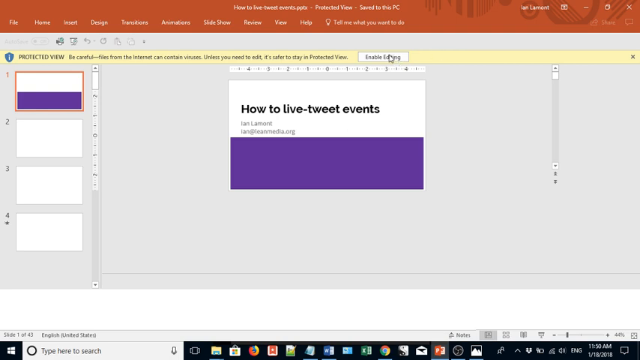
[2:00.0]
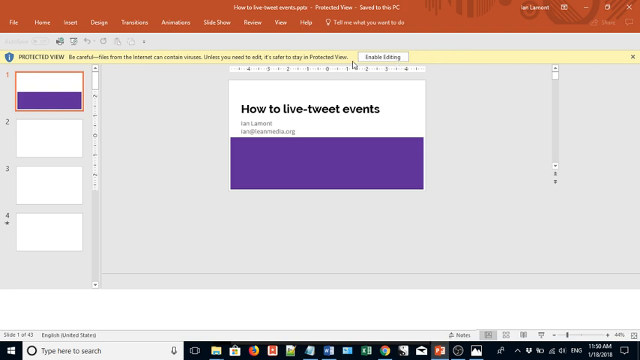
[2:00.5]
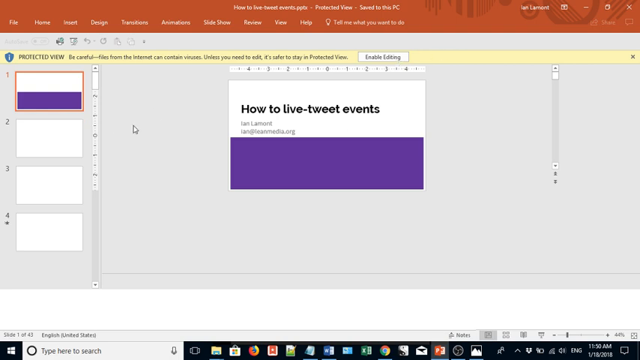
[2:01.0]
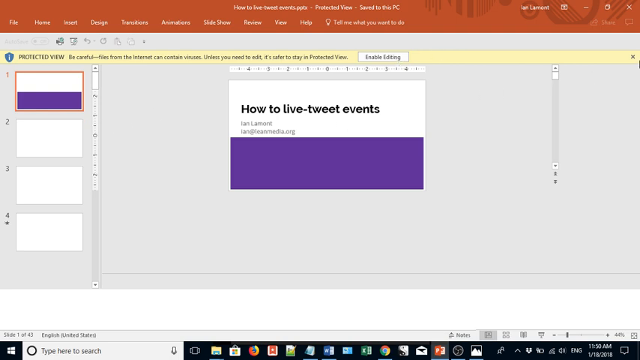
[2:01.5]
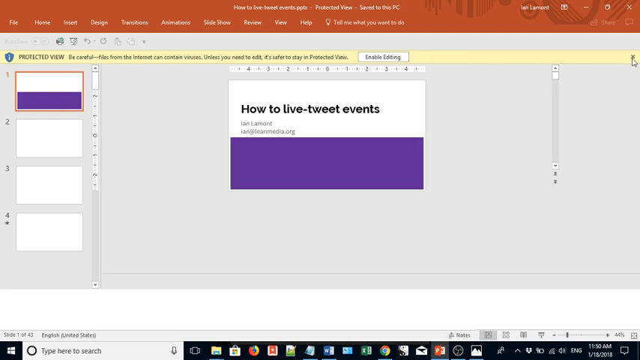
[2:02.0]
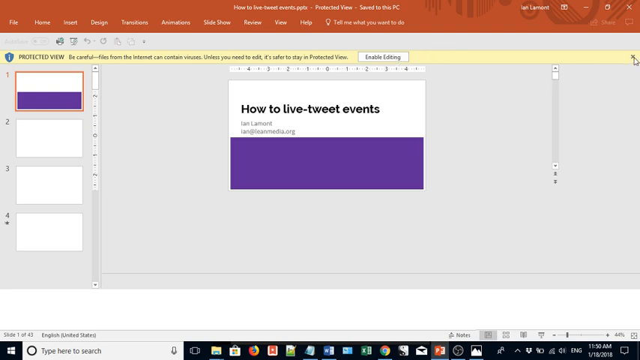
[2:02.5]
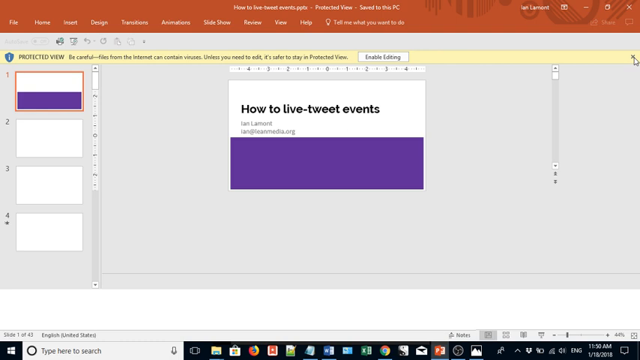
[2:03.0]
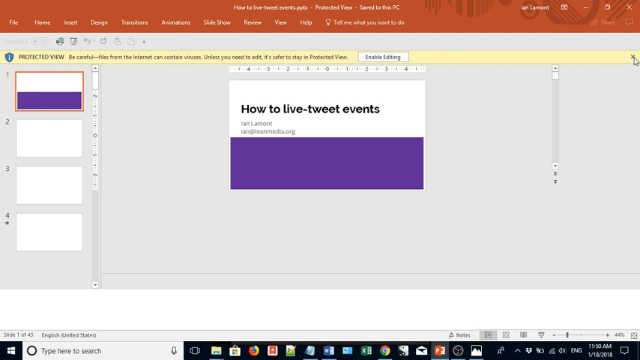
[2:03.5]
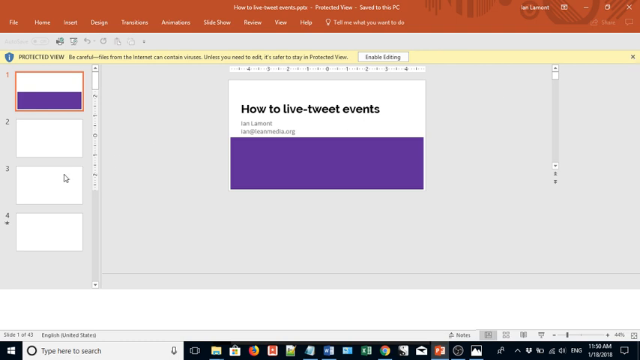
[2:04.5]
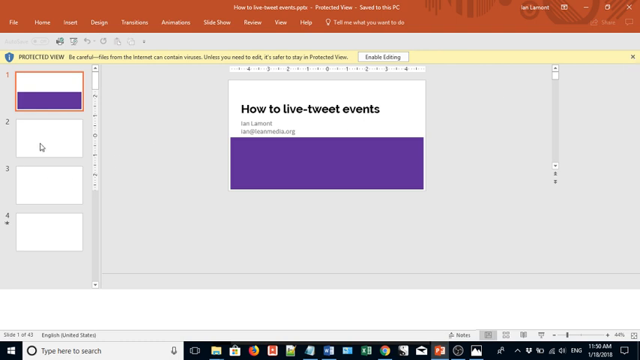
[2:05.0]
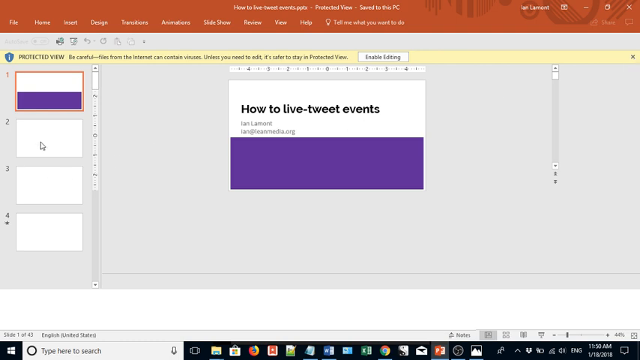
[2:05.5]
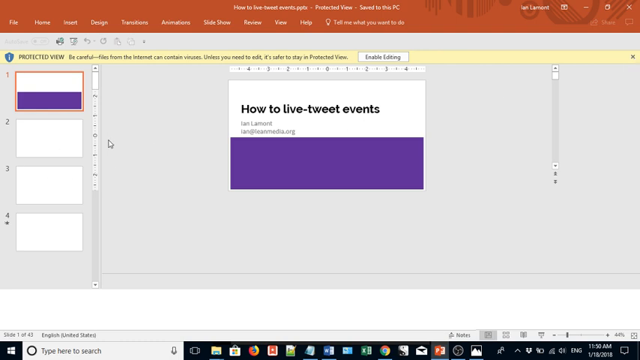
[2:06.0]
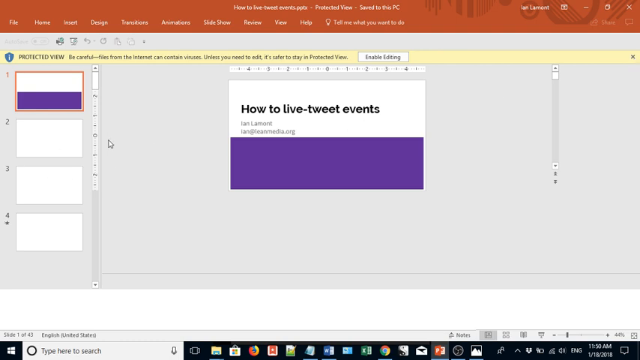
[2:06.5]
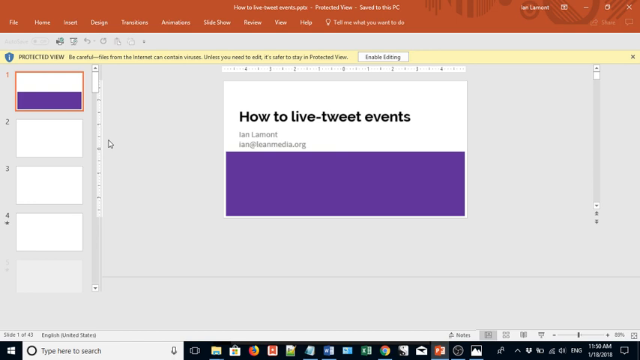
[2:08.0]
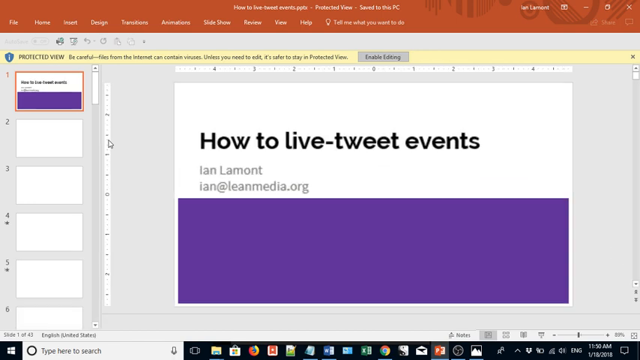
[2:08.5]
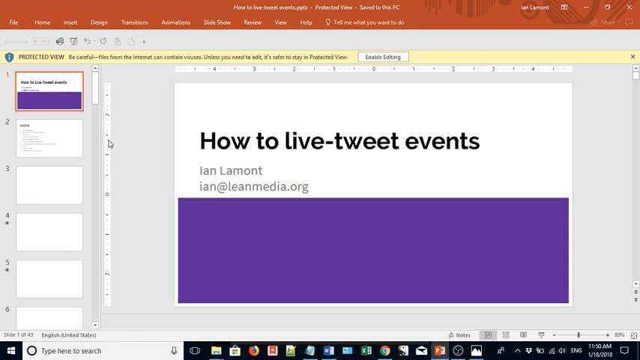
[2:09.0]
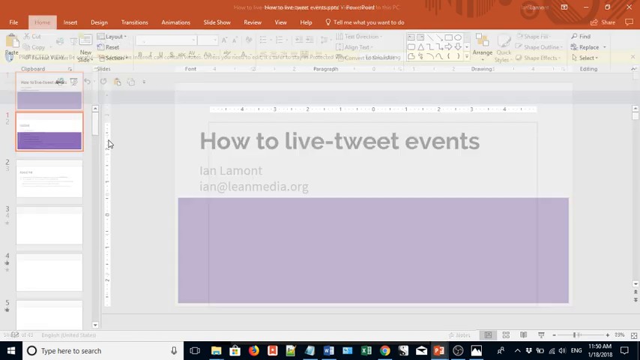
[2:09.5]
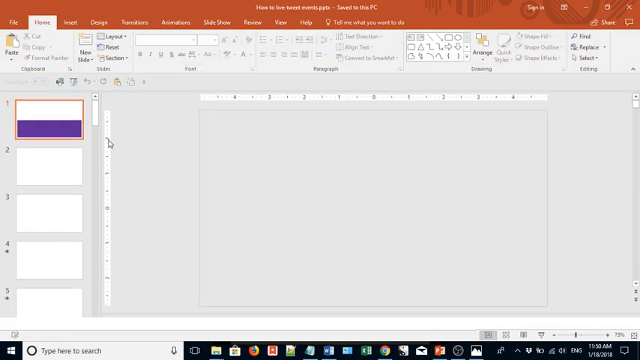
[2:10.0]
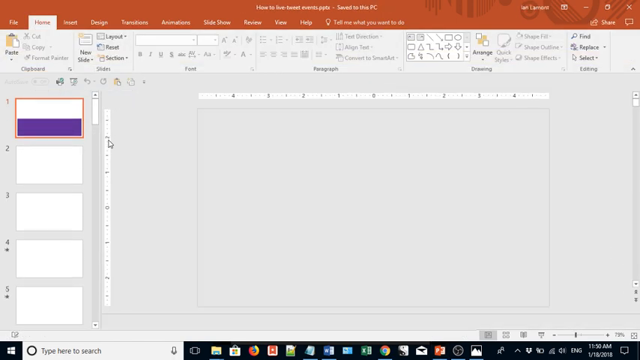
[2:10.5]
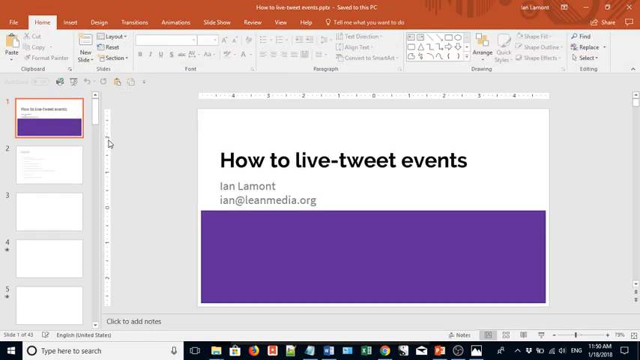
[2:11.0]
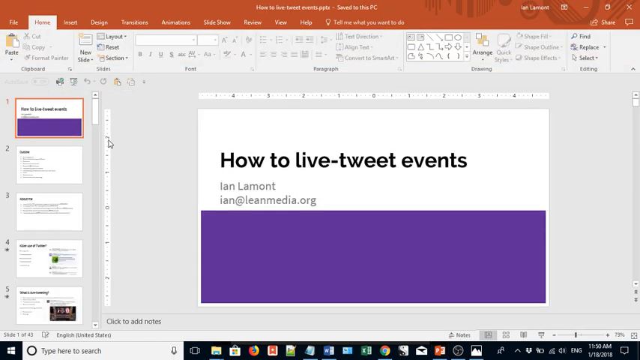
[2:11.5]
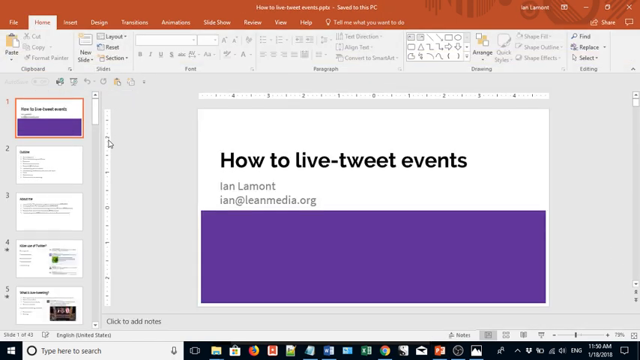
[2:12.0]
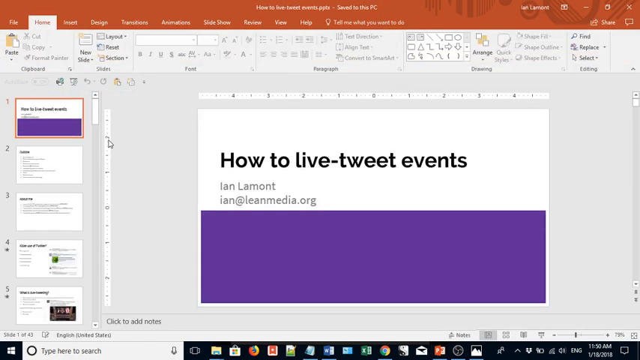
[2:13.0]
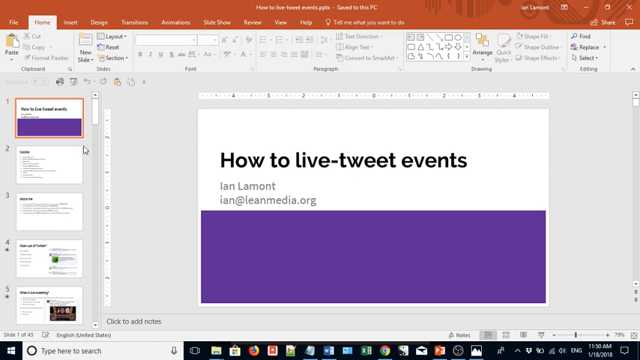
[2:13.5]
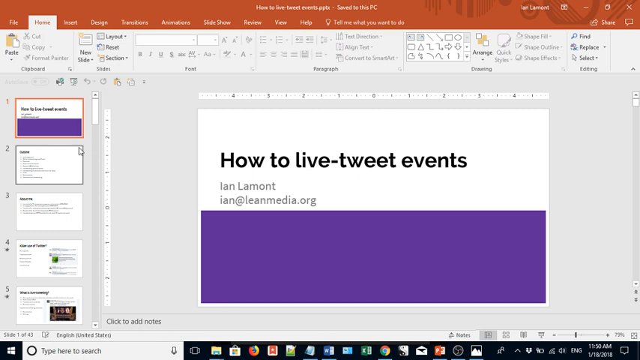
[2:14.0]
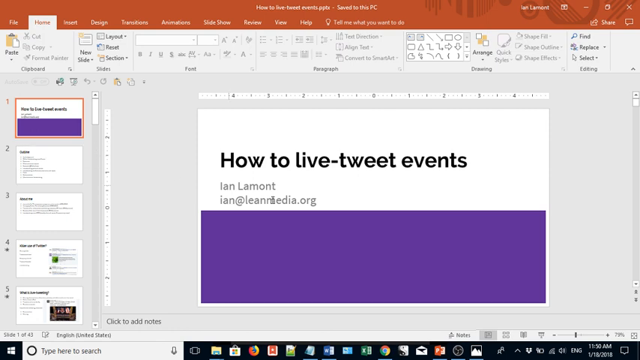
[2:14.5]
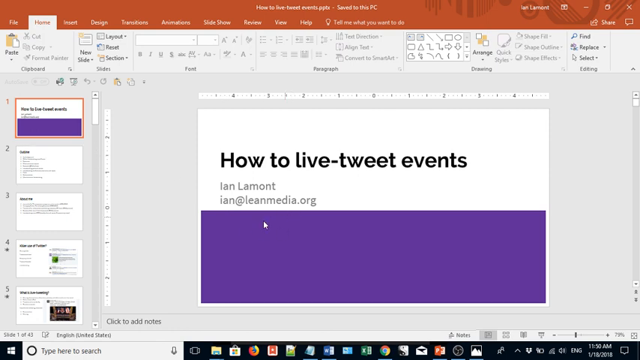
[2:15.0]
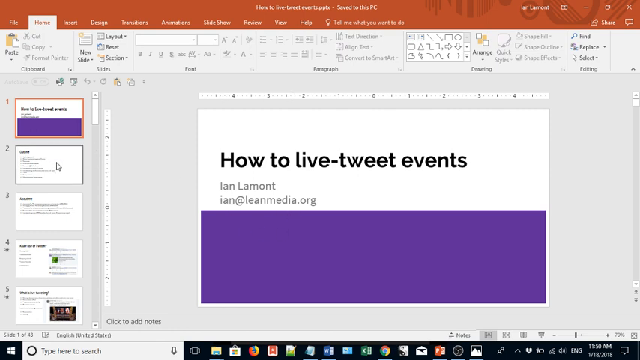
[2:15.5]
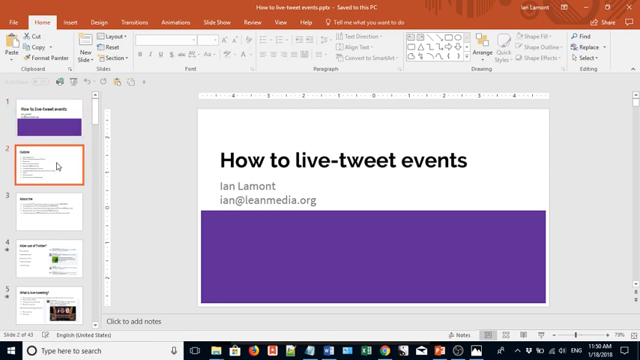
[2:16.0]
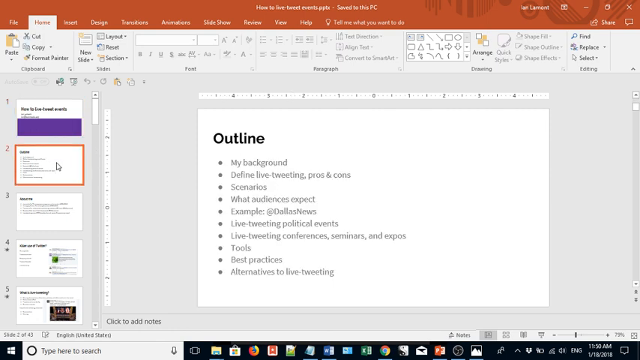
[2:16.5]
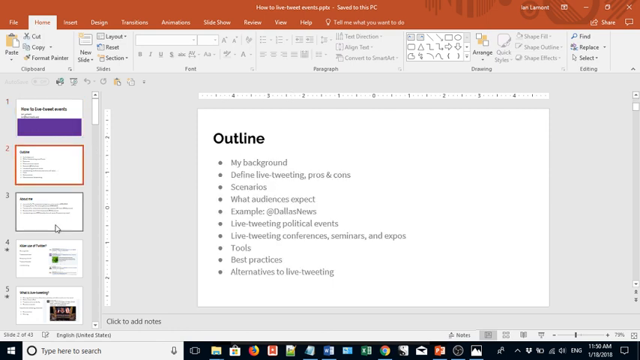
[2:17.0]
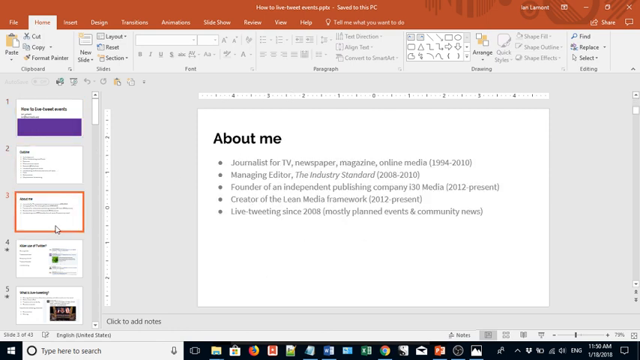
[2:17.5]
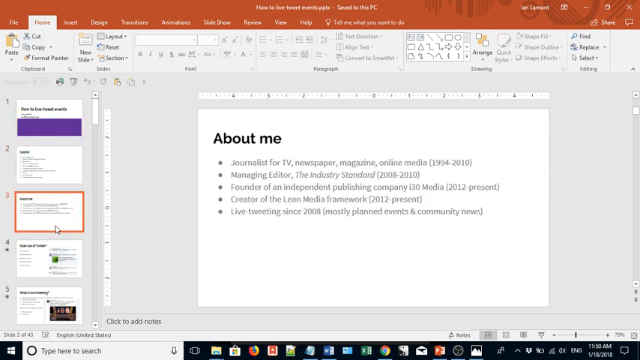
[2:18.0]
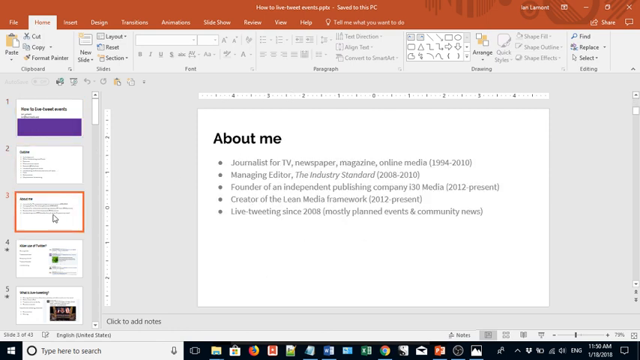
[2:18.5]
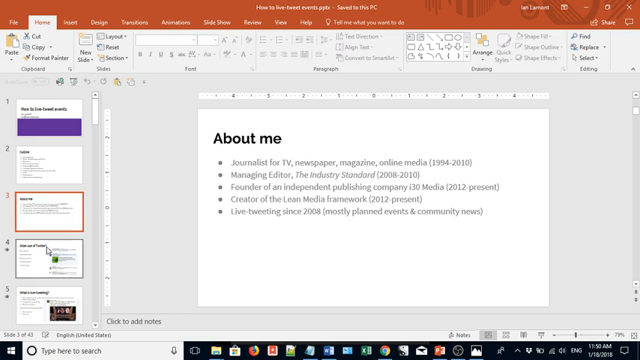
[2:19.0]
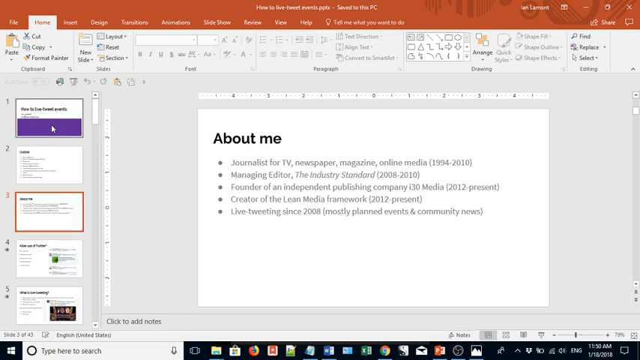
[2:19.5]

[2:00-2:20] A PowerPoint presentation is open in protected view on the first slide, which has a white background, a heading in black text reading "how to live tweet events," "Ian Lamont" below it to the left, "Ian@leanmedia.org" beneath that, and a large purple rectangular box covering the lower half of the slide. A small, thin yellow rectangular bar runs across the top of the screen with black text reading "protected view. Be careful- Files from the internet can contain viruses. Unless you need to edit, it's safer to stay in protected view," beside a button with a white background and black text reading "enable editing." The user seems to click the enable editing button, which opens the presentation in regular PowerPoint instead of protected view so it can be edited. It is still on the first slide titled "How to Live-Tweet Events," and a panel on the left shows thumbnail previews of the other slides. The user clicks the second slide, which has a heading reading "Outline" on the left and a bulleted list beneath giving the outline of the presentation. The user then clicks the third slide, which has the heading "About Me" and a bulleted list underneath with information about the creator of the presentation.